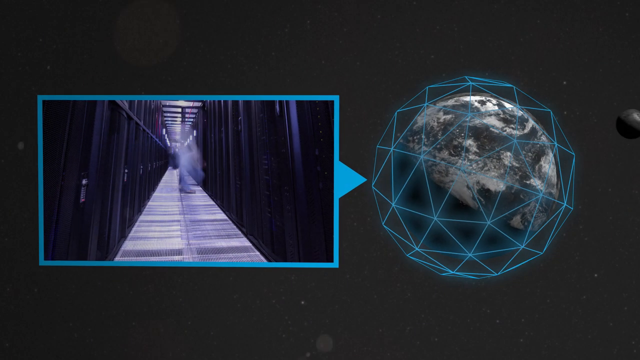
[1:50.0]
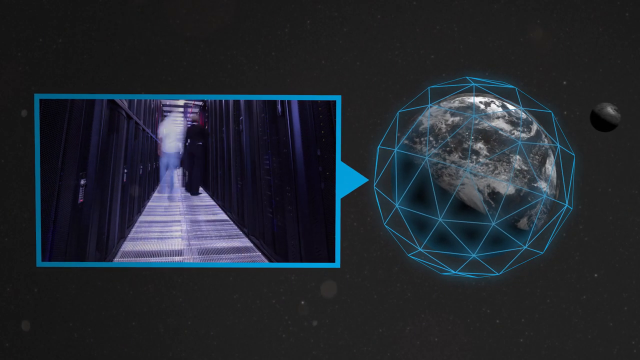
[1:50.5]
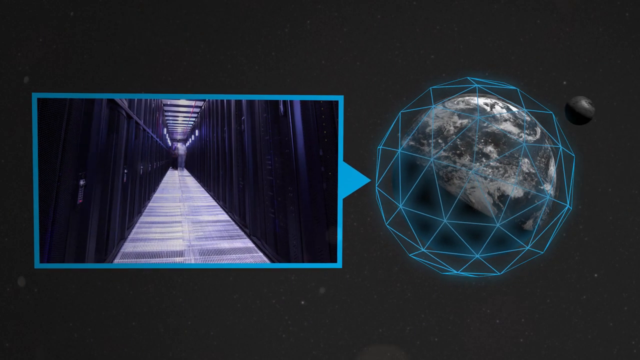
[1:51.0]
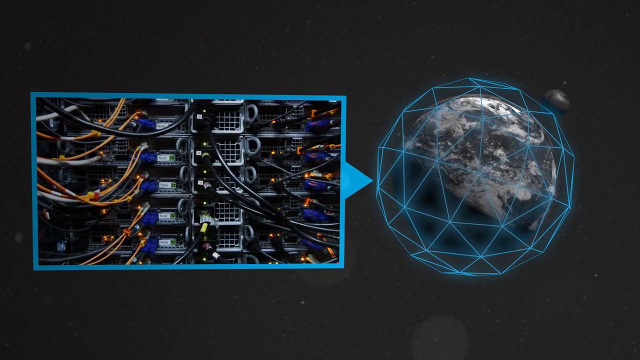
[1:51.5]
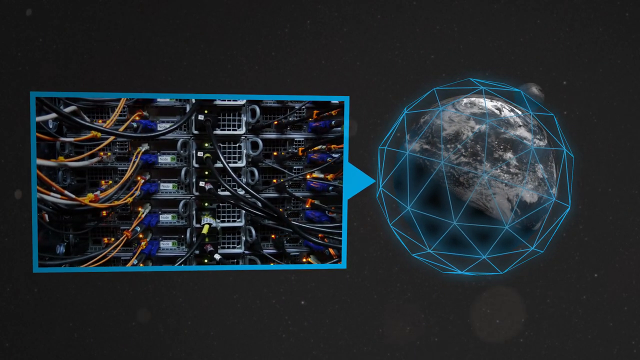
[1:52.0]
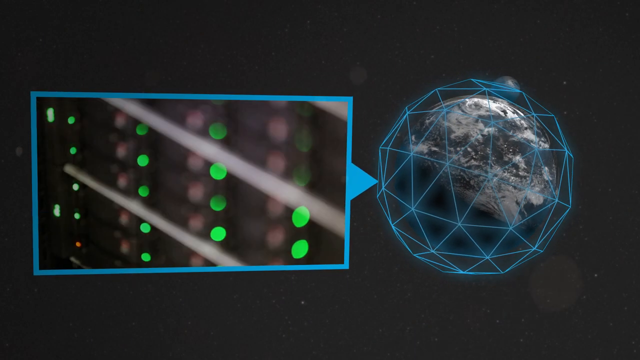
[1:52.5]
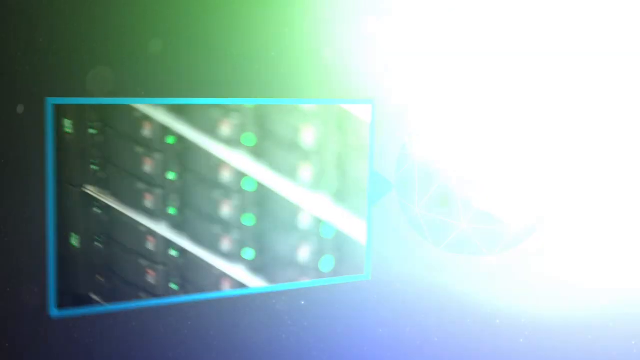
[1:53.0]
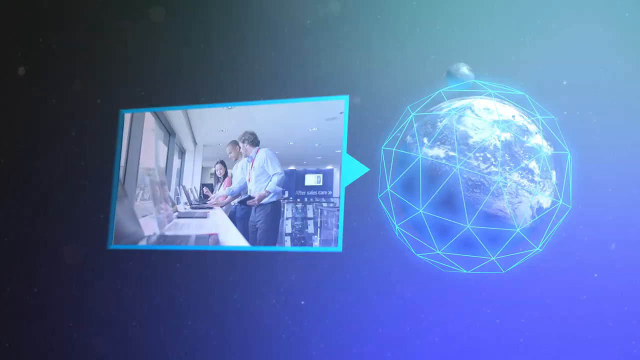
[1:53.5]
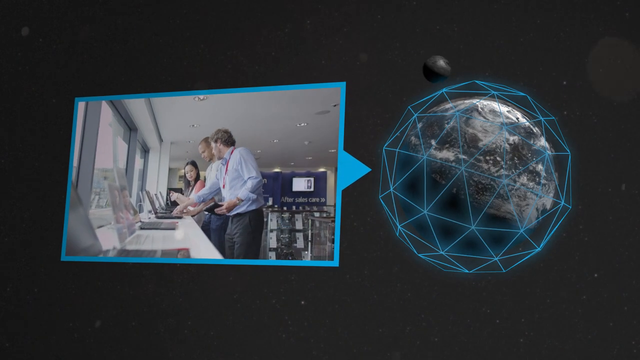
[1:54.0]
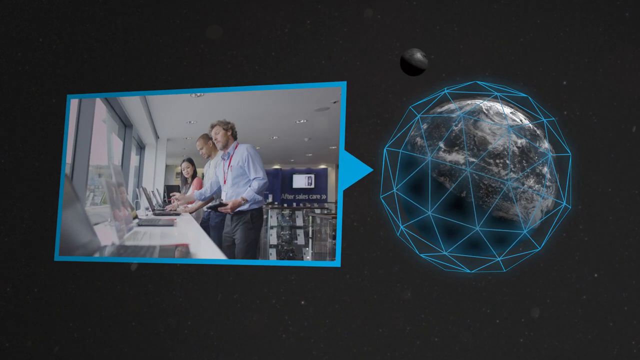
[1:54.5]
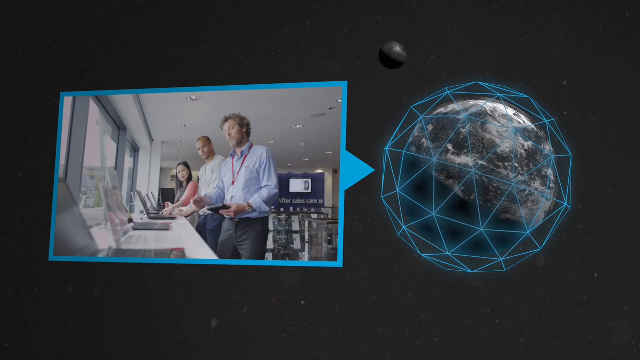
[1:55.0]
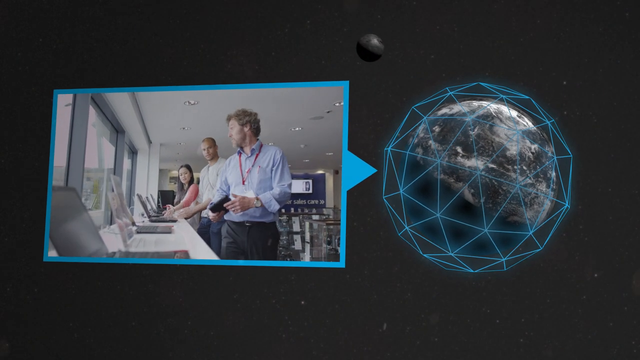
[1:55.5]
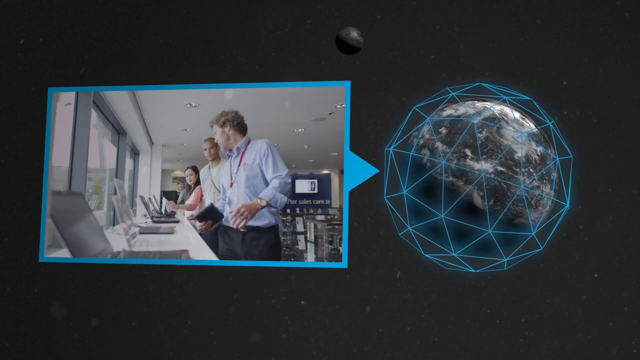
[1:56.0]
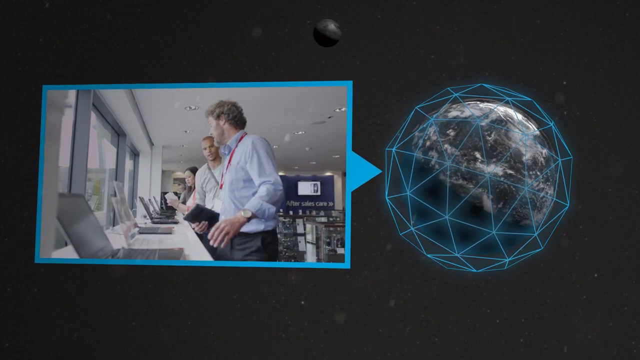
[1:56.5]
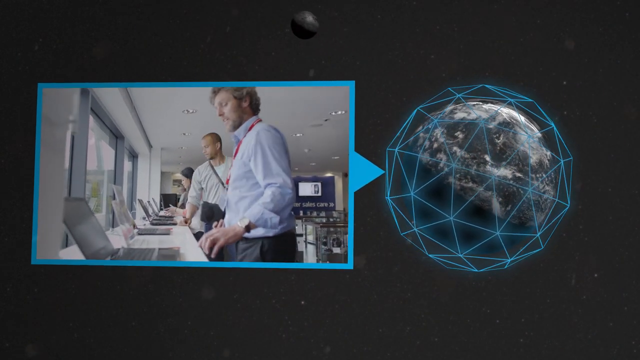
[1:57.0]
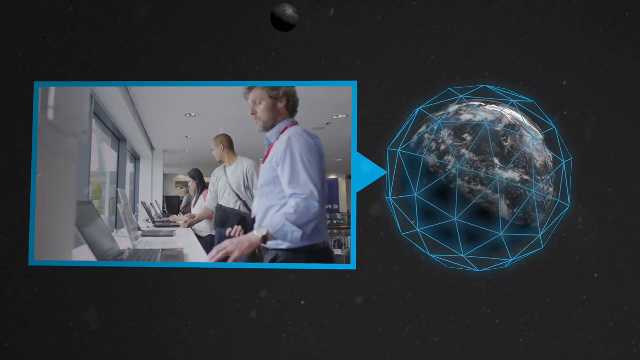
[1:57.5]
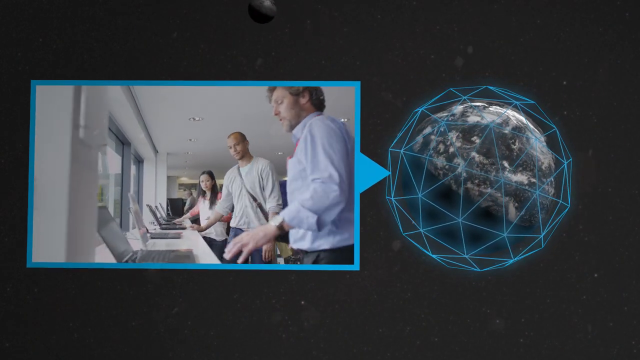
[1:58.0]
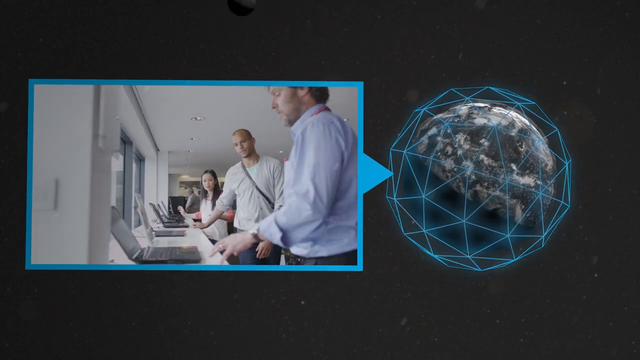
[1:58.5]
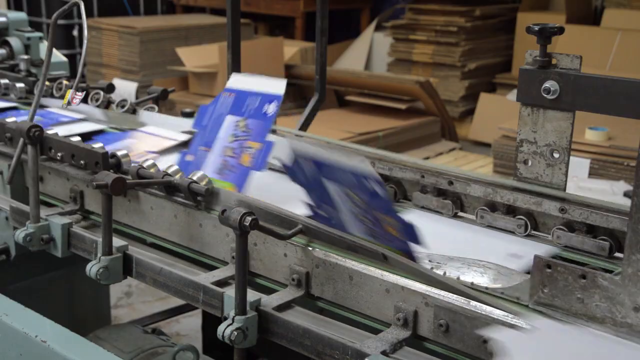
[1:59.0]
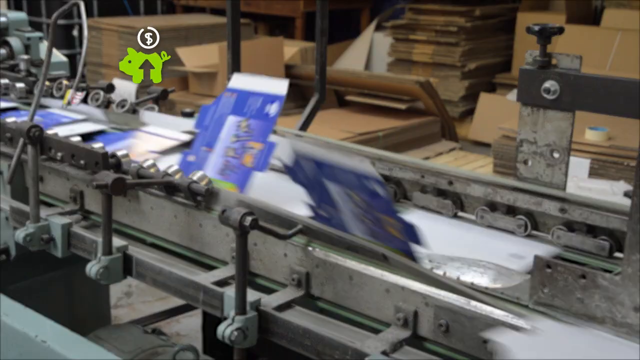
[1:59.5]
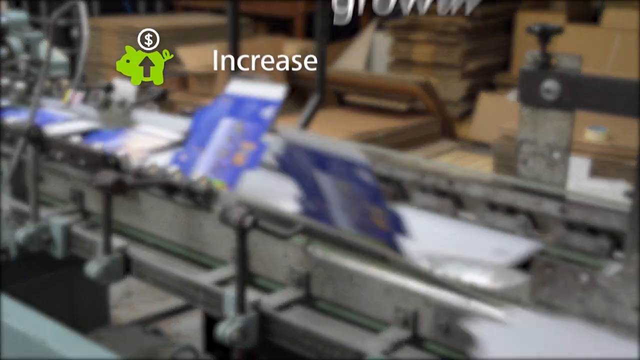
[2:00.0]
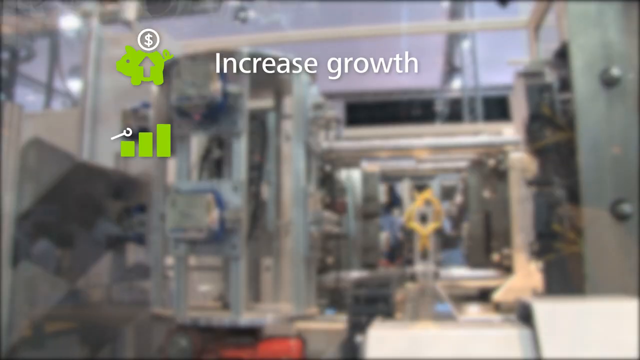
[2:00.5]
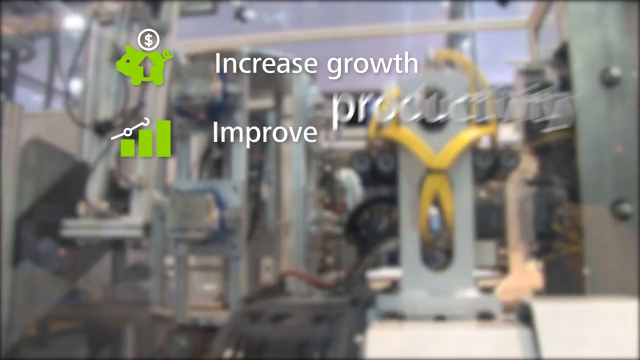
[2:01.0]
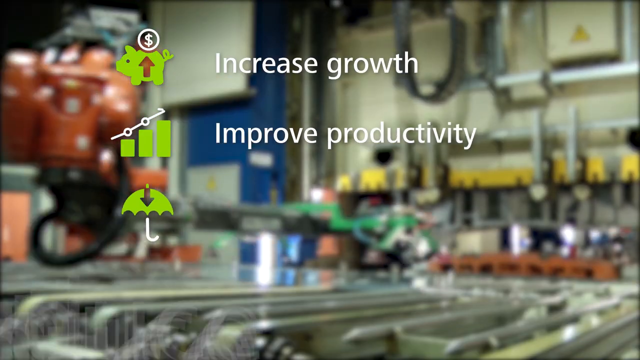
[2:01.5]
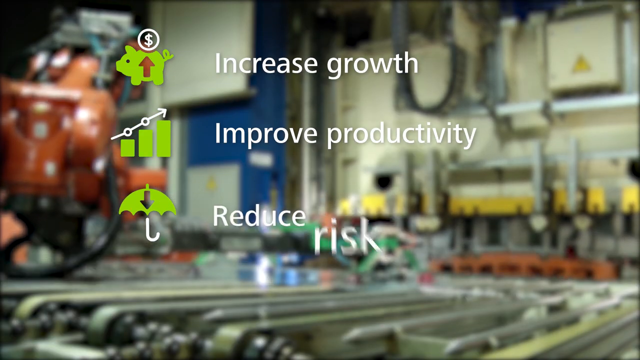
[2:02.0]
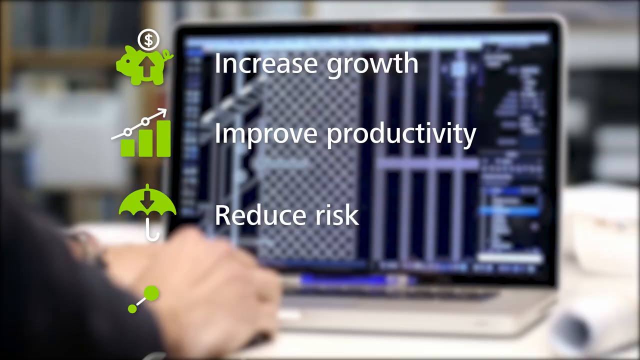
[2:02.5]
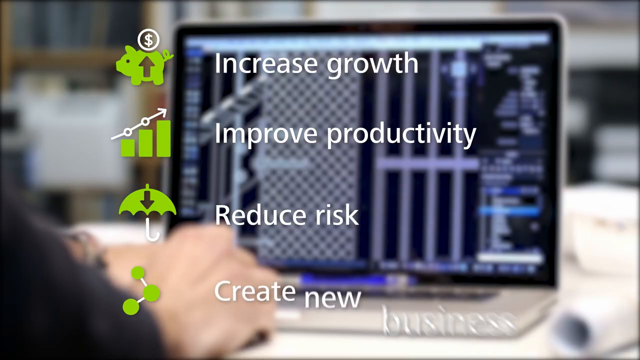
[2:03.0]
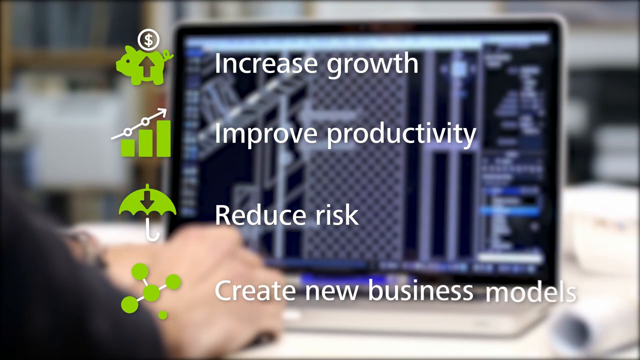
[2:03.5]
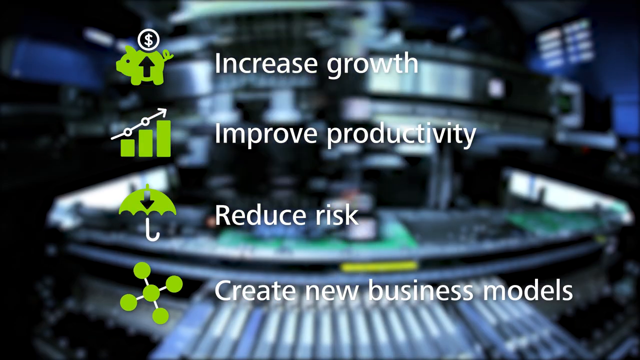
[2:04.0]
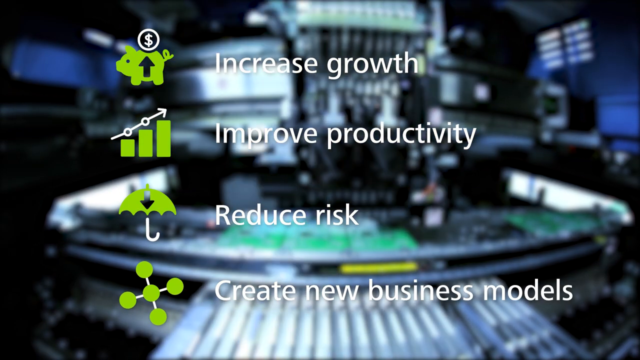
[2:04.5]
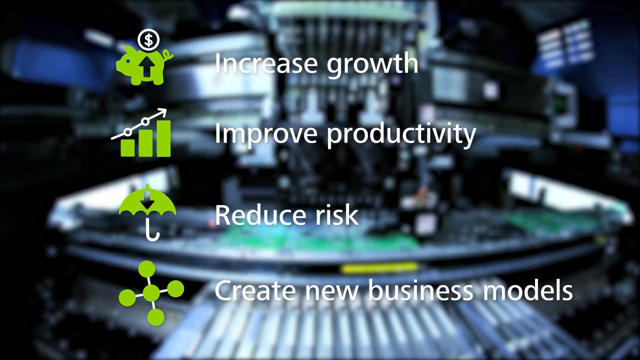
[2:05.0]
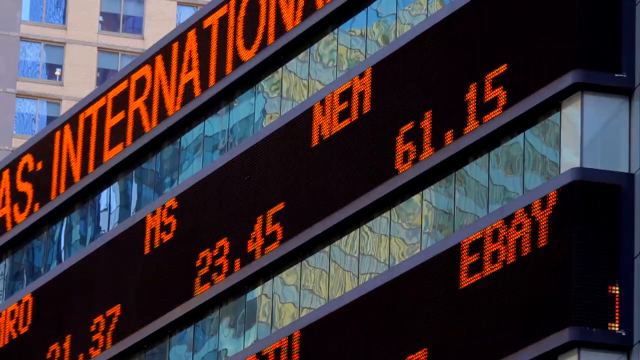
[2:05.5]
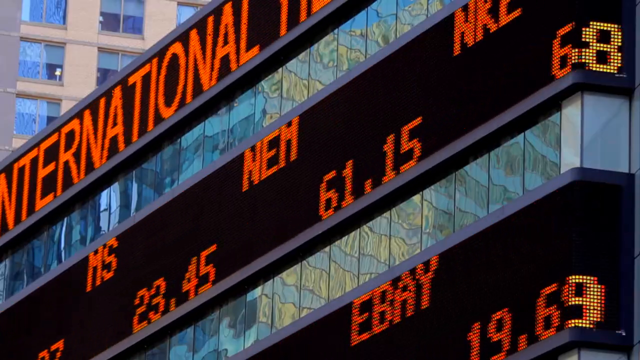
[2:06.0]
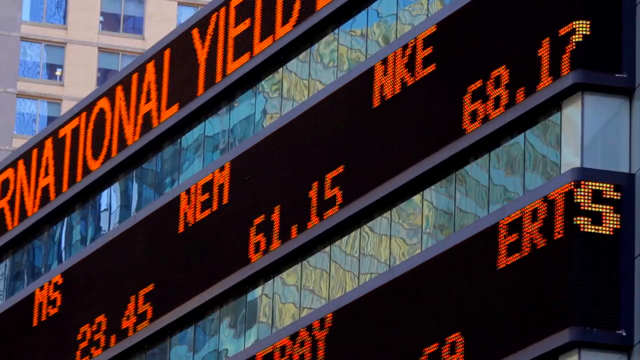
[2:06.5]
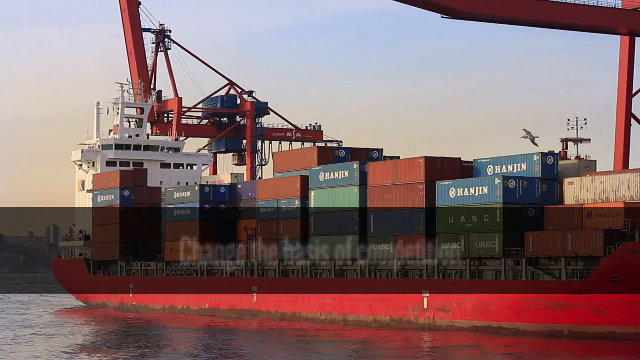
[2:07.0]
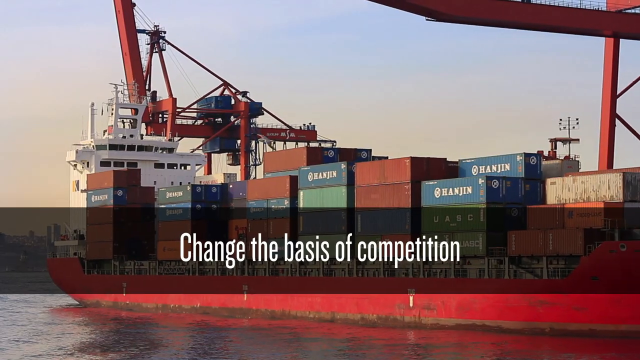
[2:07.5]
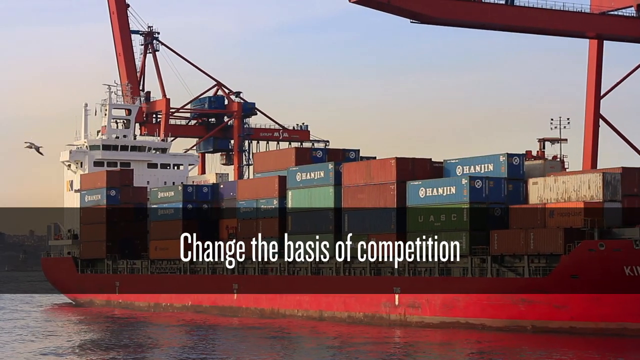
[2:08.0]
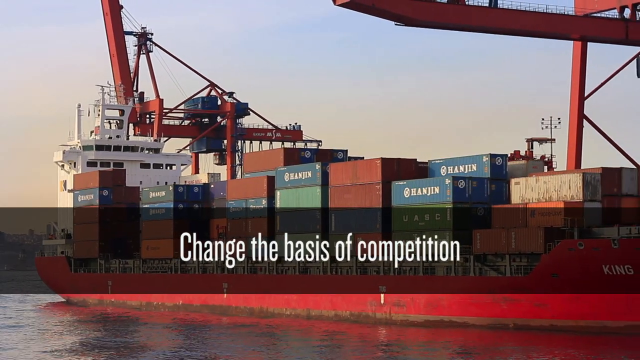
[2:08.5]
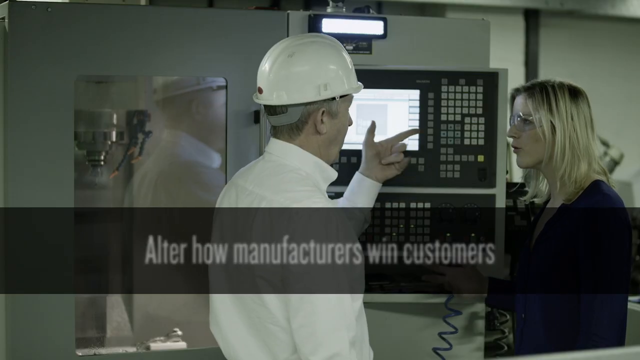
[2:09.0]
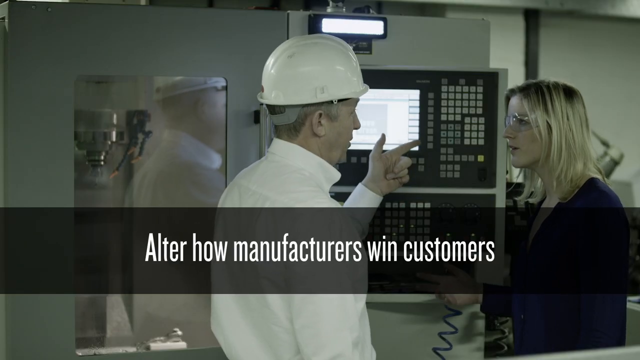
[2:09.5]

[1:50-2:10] A gray circle that almost looks like some sort of planet or moon is on a black background with a blue cage on top of it. To the side is a blue box with changing images, most of which look like some type of machinery or computer workings. The image changes to people working on computers, and then to a conveyor belt that looks like it is cycling through some type of packaging. At the top of the screen it says "increase growth", below that "improve productivity", below that "reduce risk", and below that "create new business". While these pop up, the background behind the words changes to different images of machinery and productivity.